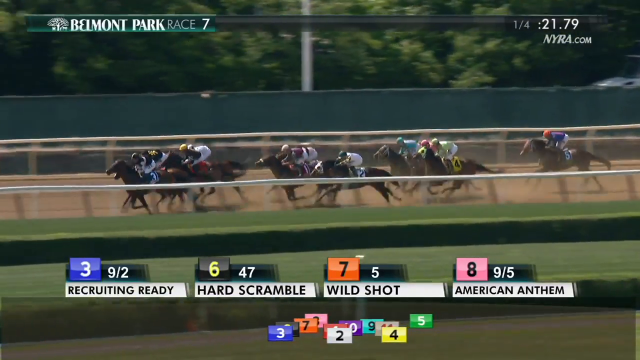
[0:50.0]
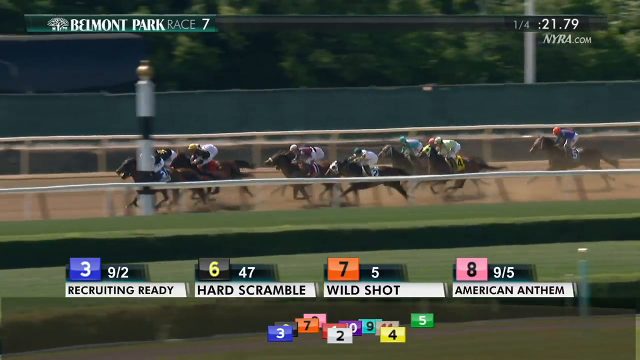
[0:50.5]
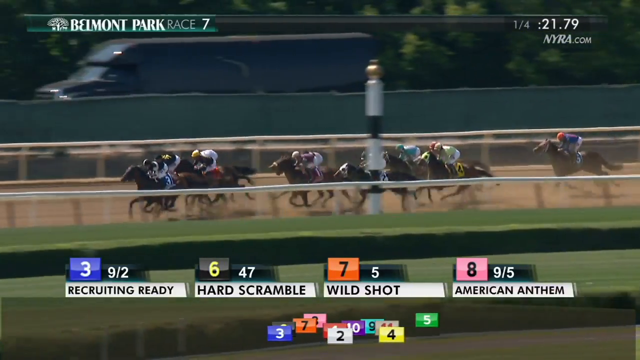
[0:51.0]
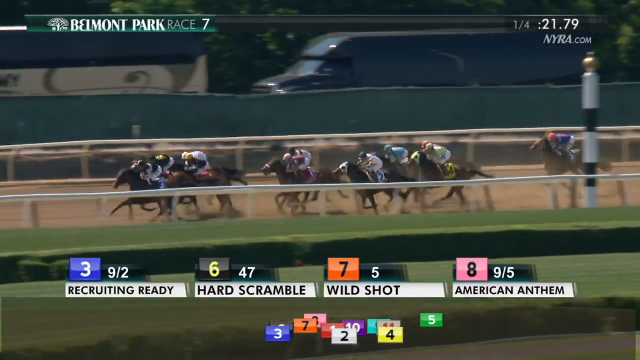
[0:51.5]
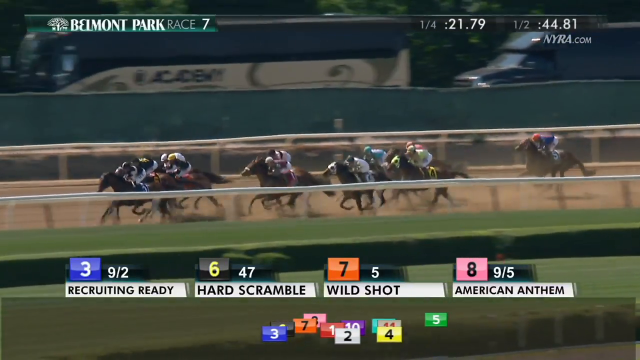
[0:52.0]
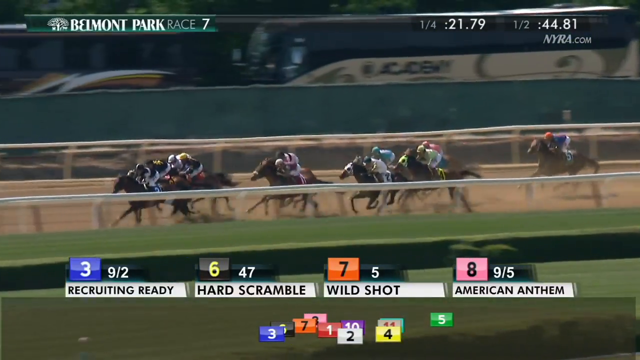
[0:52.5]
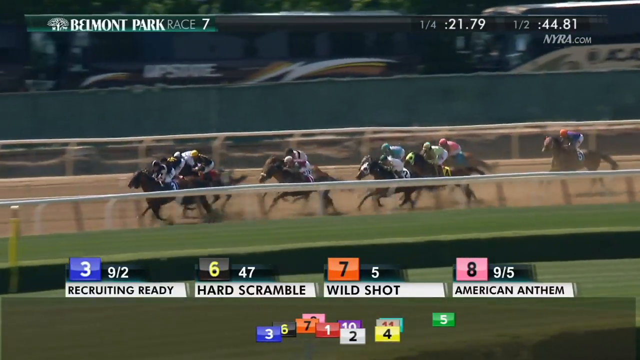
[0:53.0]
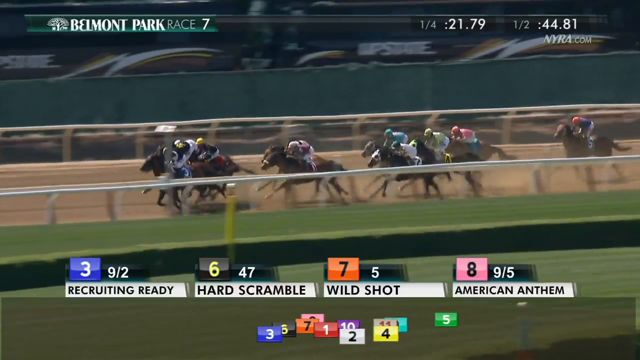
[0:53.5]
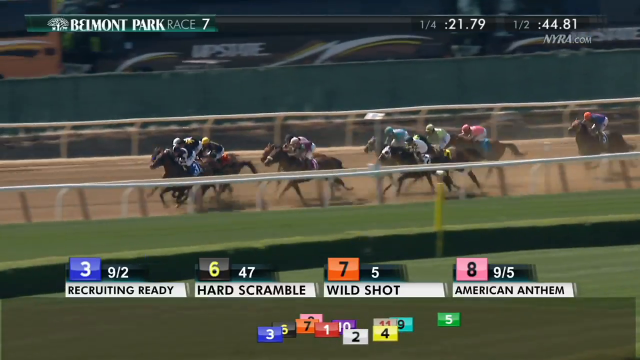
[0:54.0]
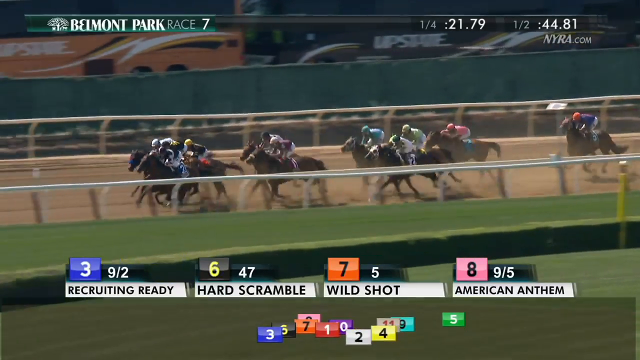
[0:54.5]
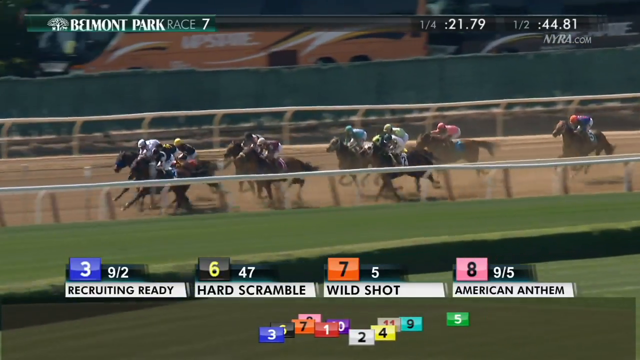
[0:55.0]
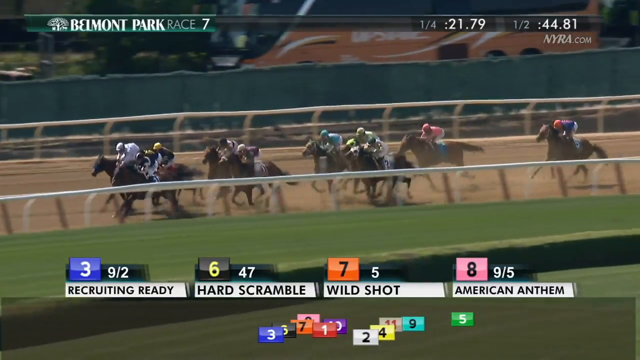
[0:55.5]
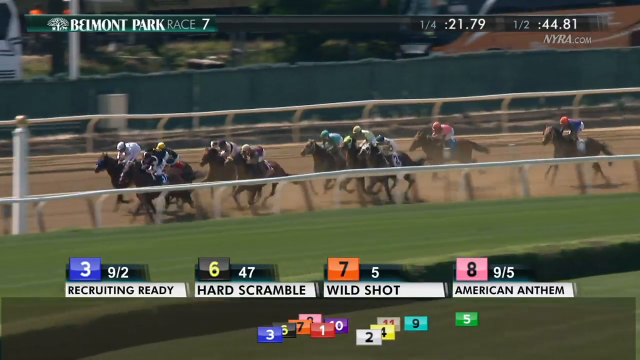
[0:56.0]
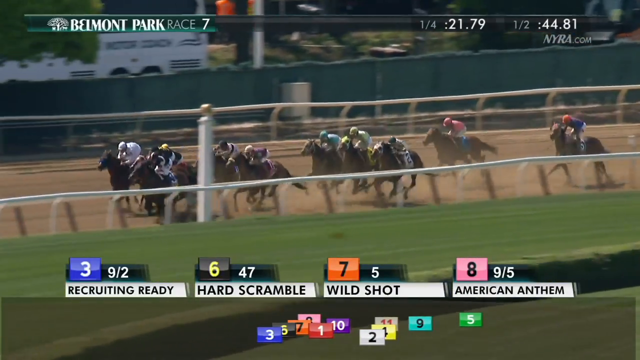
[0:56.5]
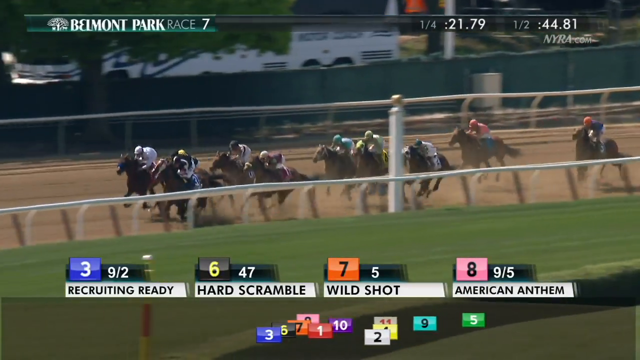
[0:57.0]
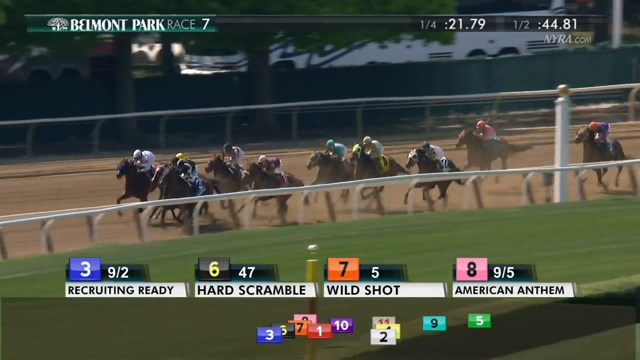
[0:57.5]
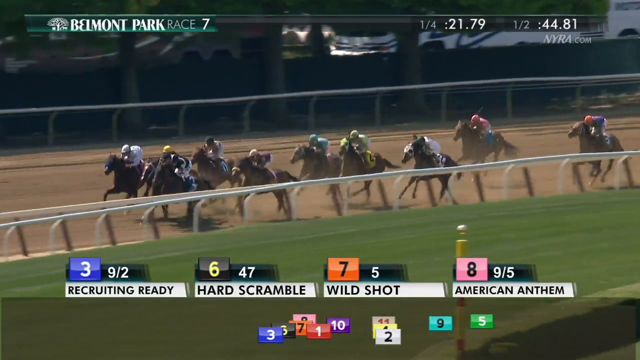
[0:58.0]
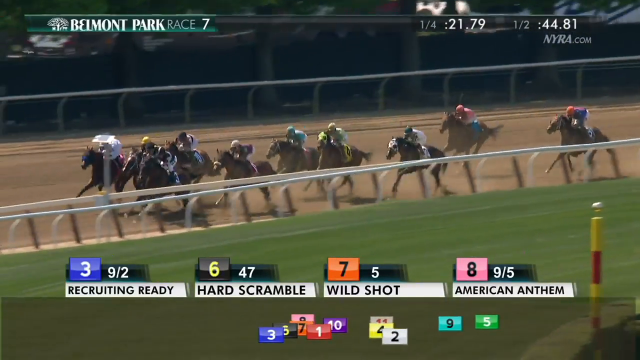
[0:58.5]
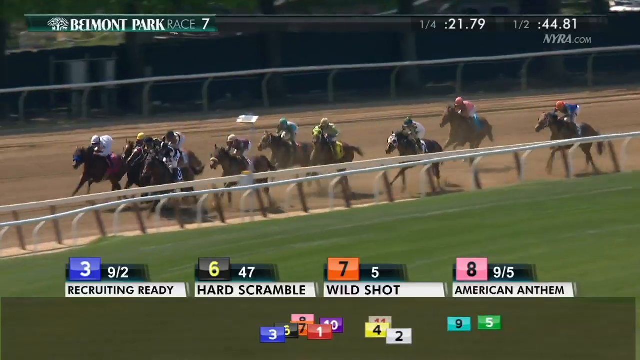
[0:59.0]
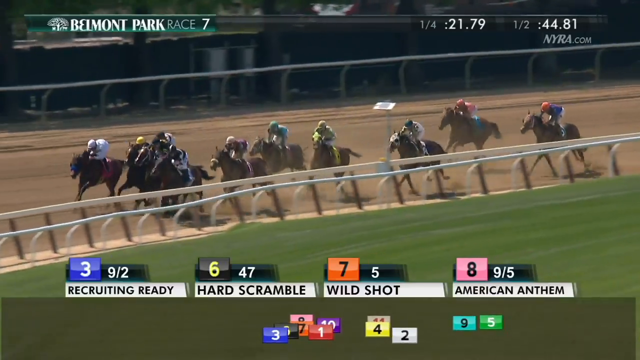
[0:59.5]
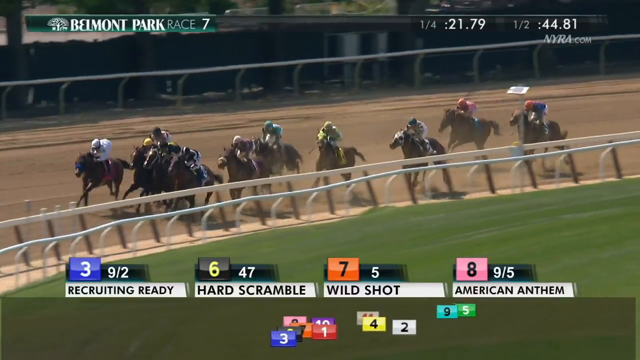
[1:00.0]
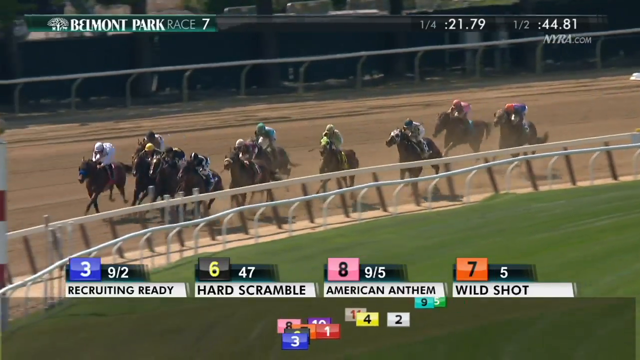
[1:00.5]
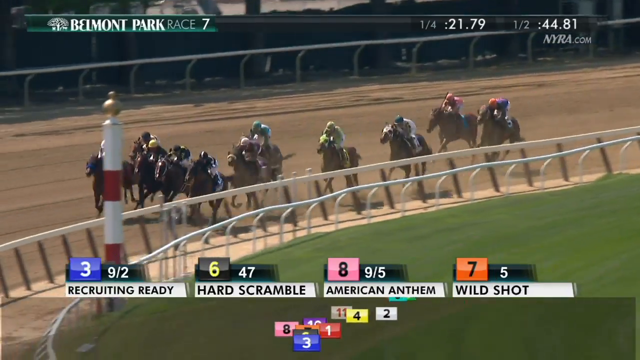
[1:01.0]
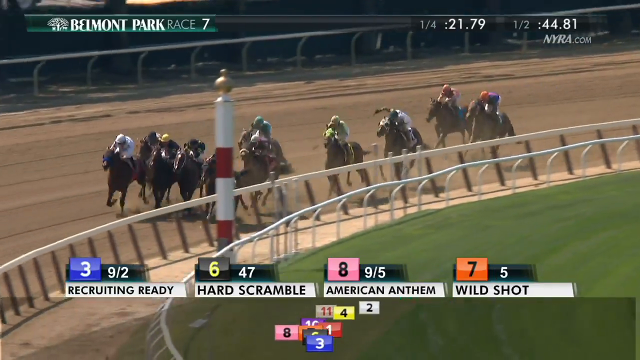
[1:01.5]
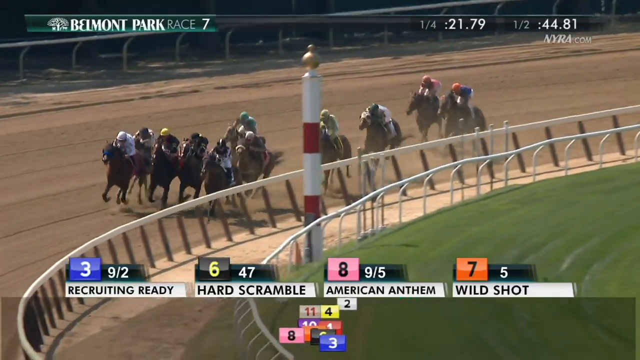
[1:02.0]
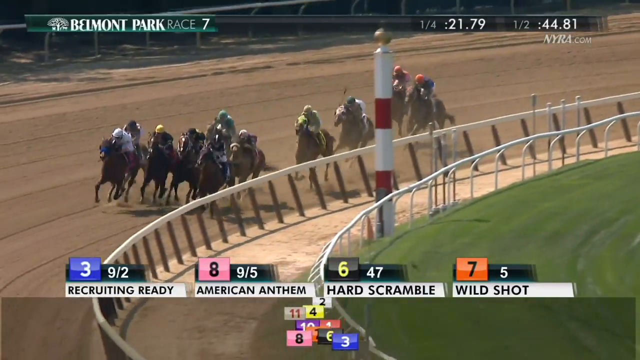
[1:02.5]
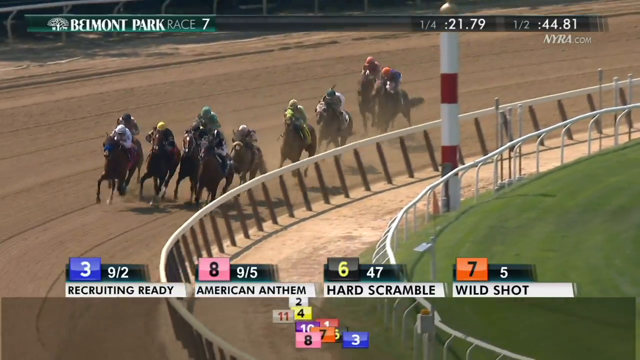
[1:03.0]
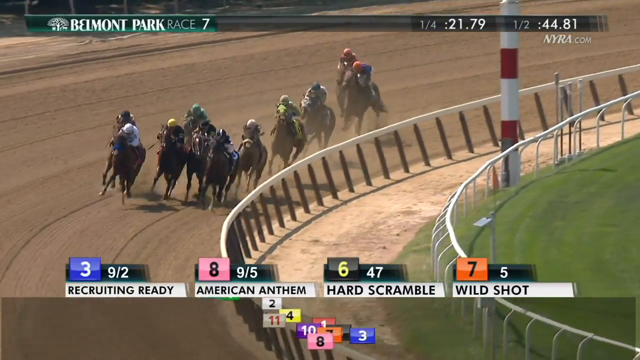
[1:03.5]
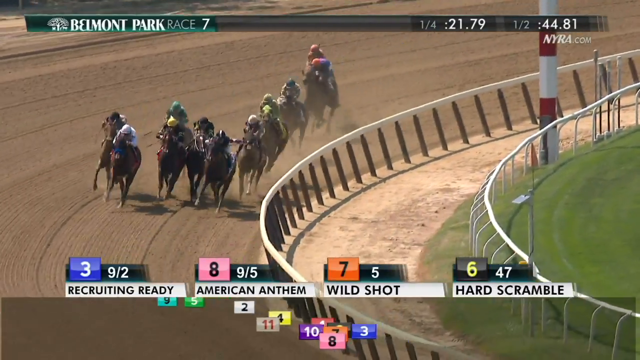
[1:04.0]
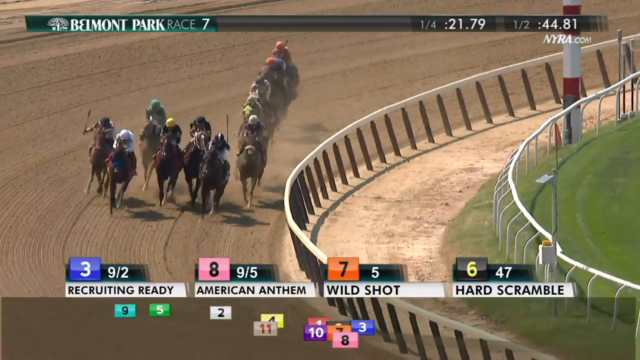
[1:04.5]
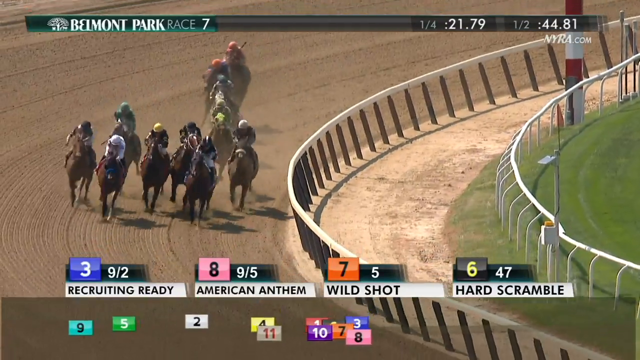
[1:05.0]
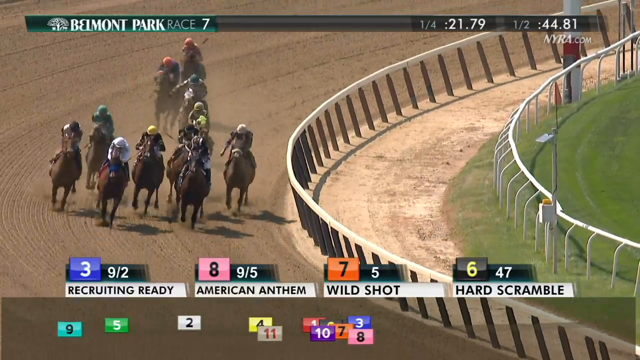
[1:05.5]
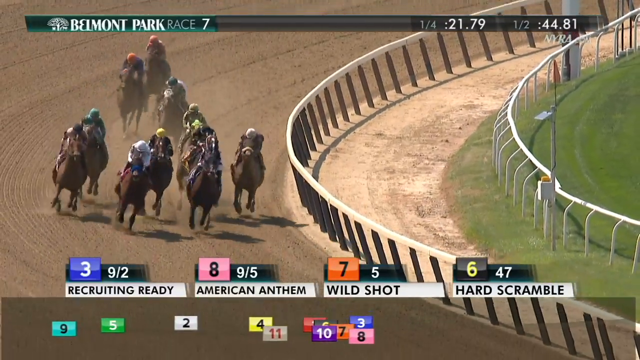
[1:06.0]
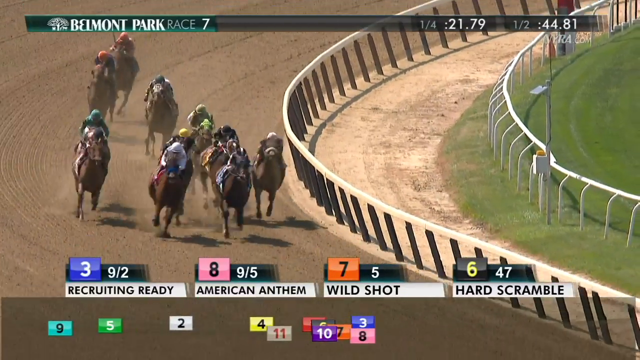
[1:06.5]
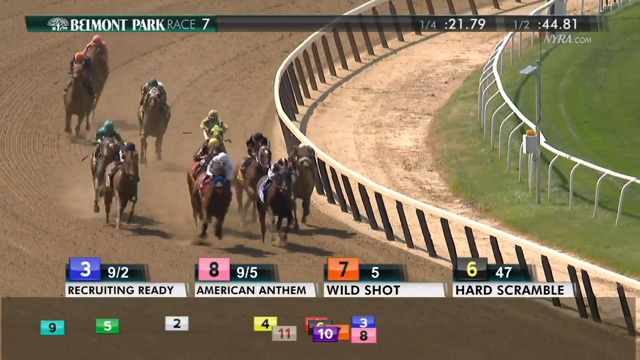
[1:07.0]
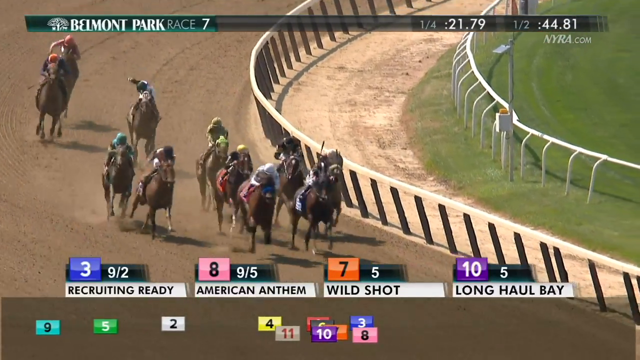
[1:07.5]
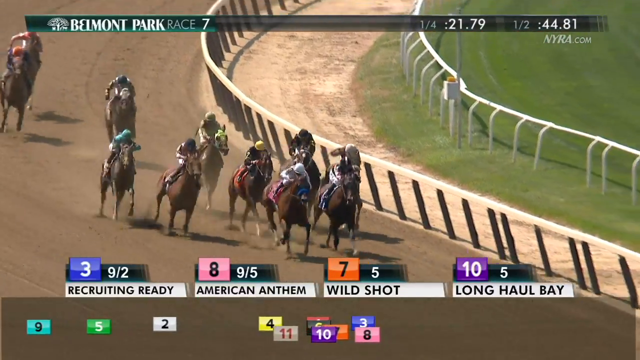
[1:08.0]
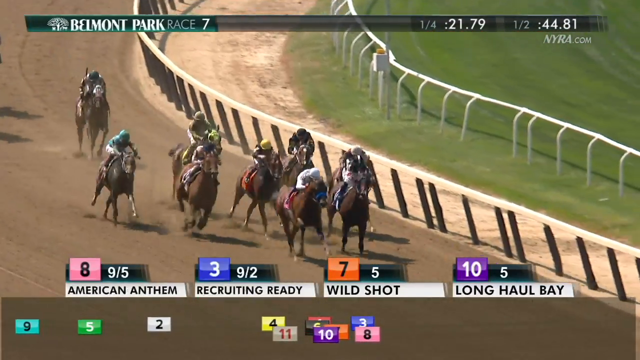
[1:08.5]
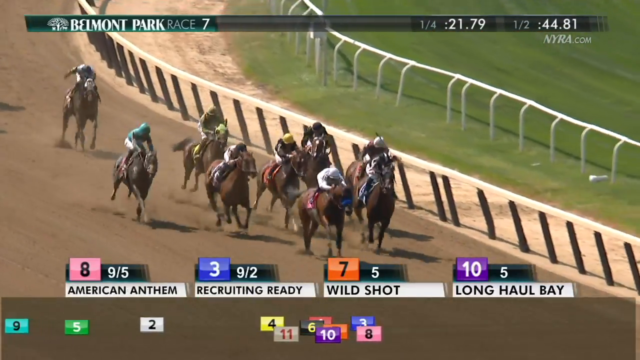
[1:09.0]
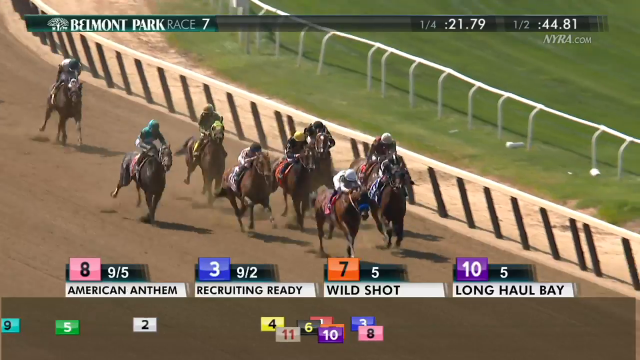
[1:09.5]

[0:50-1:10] A couple of horses pass by what looks almost like an Amazon van: dark navy, odd at the front, more like a truck, with what looks almost like a fifth wheel RV in place of a truck bed. To the left of it is a tour bus with "Academy" on its sides and darkened windows, plus several more vehicles, two of the same color and one orange. A couple of white poles with gold are on the grassy area inside the racetrack, and at the bottom is a yellow pole with red stripes. There are two sets of railing: the one closest to the riders has a white molding on top with black vertical bars between, then dirt dug in, then another set with the same white top that curves off to the left, with a white and red pole between them. One jockey, apparently on number three, is whipping his horse a lot, but the first-place horse seems to be gaining even more ground.